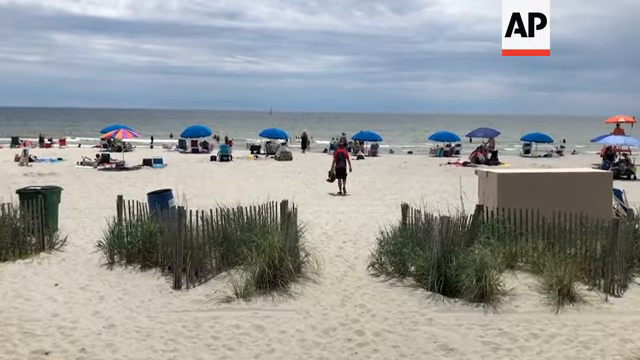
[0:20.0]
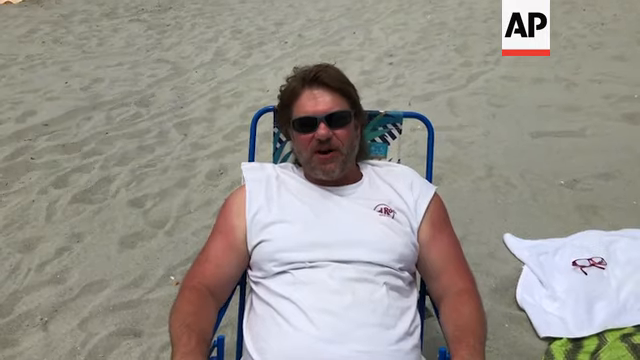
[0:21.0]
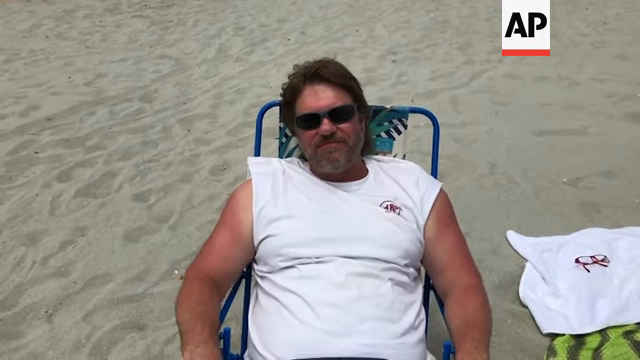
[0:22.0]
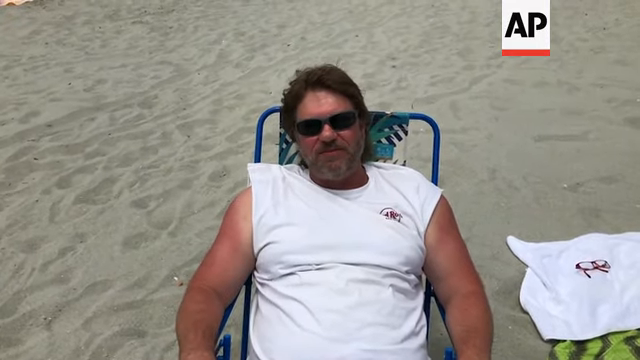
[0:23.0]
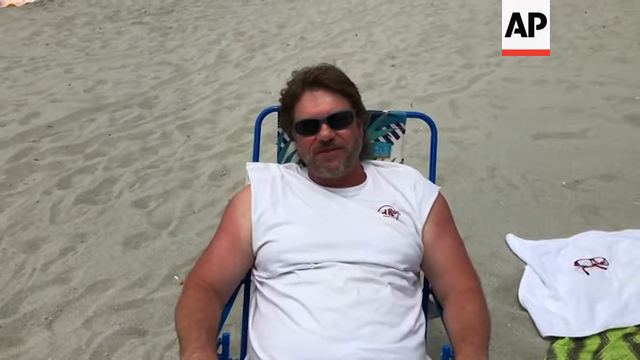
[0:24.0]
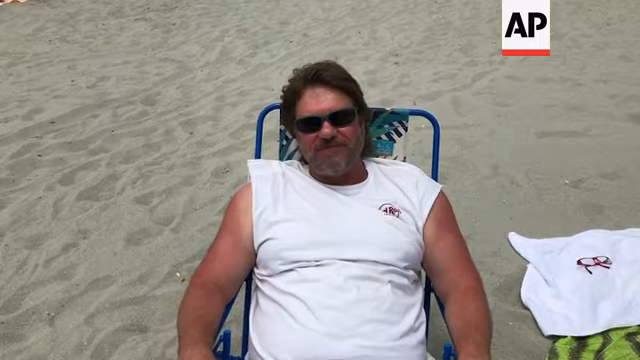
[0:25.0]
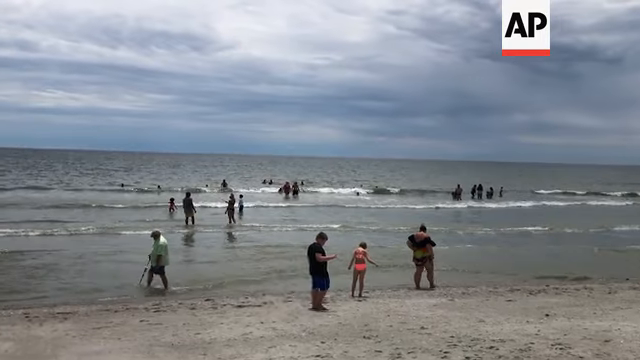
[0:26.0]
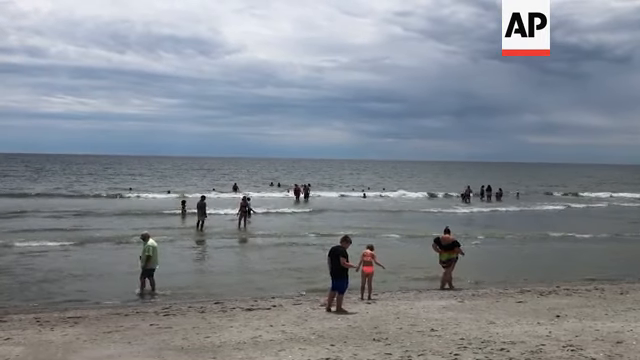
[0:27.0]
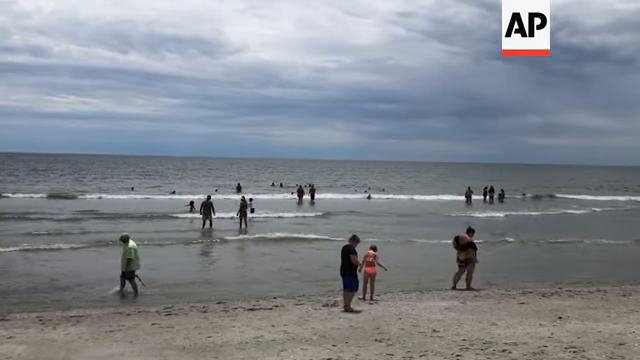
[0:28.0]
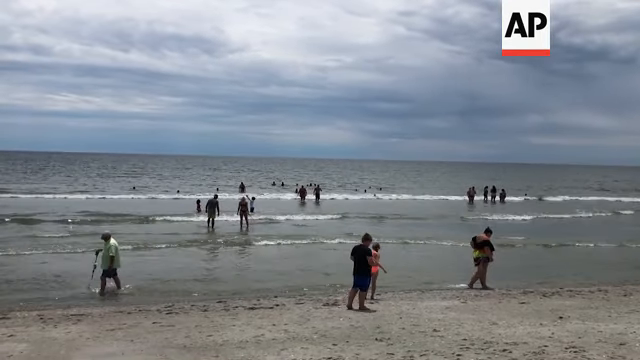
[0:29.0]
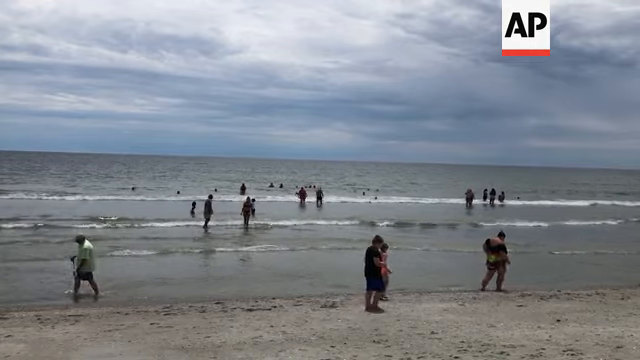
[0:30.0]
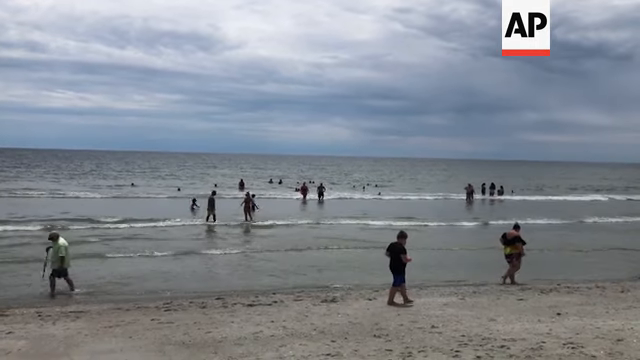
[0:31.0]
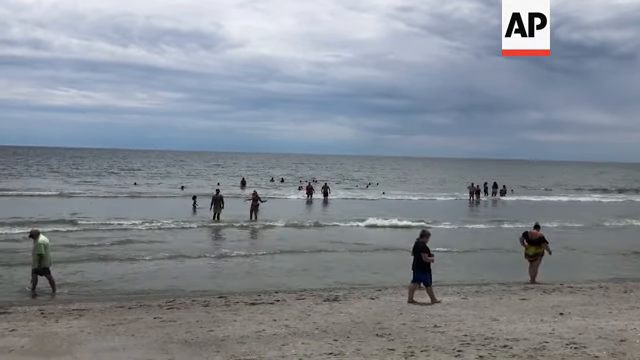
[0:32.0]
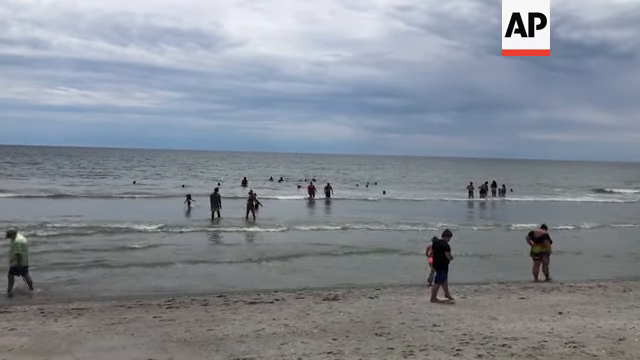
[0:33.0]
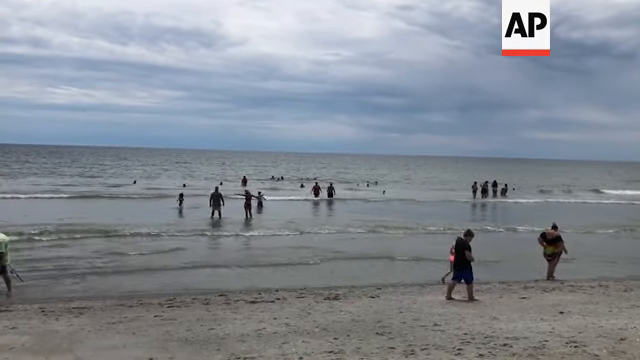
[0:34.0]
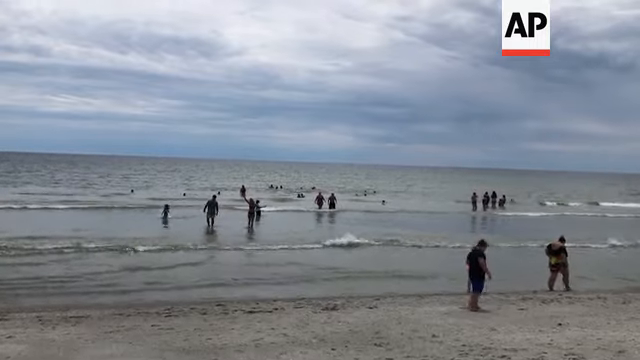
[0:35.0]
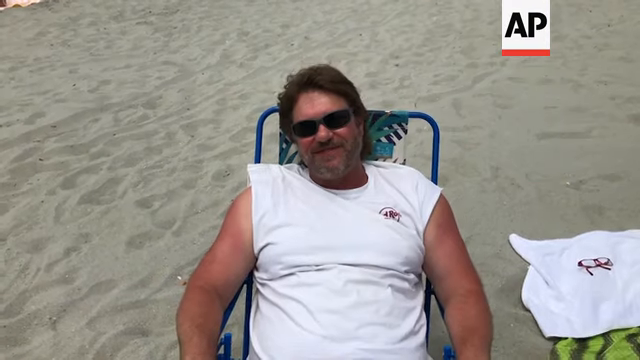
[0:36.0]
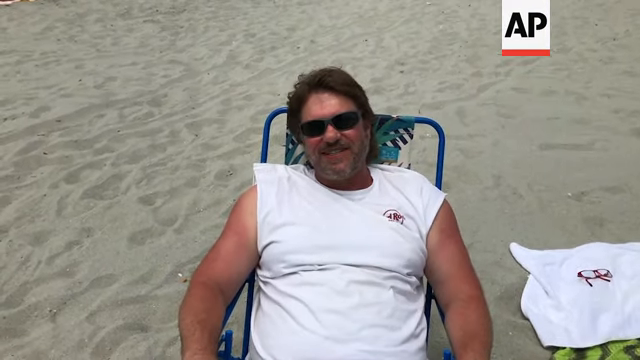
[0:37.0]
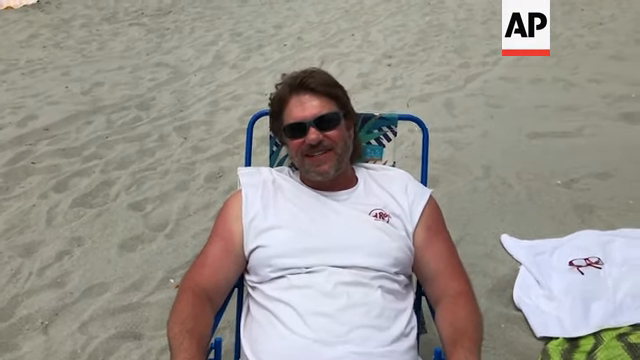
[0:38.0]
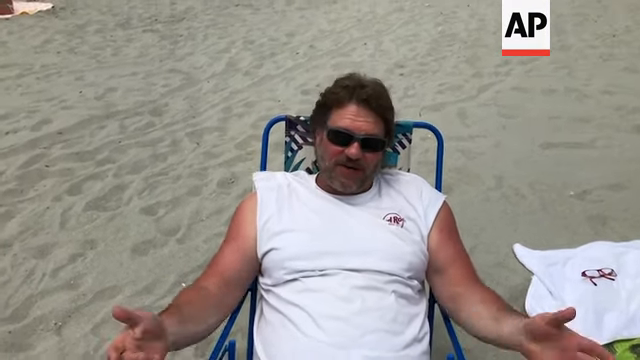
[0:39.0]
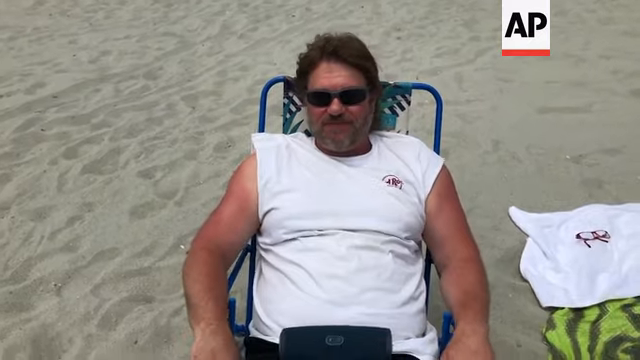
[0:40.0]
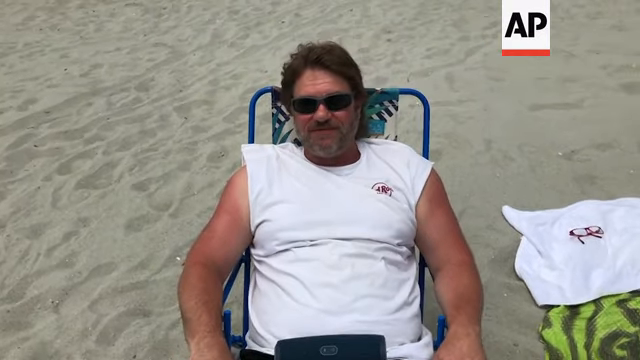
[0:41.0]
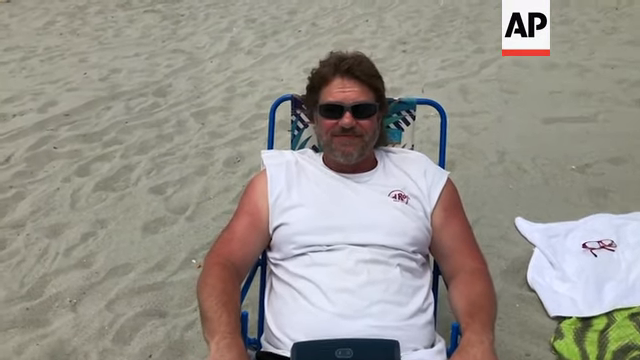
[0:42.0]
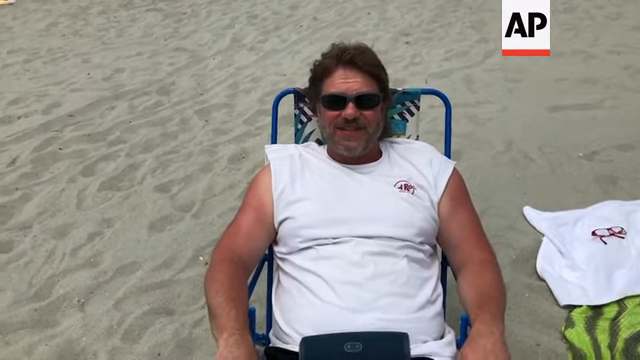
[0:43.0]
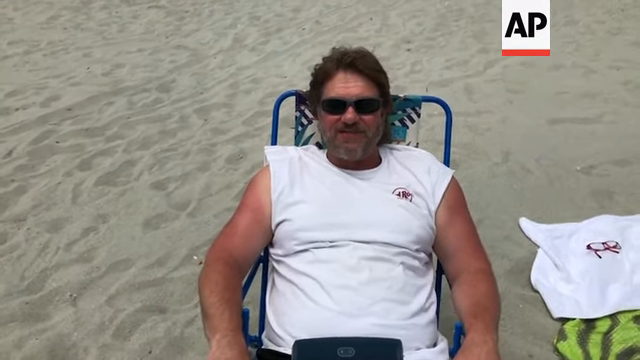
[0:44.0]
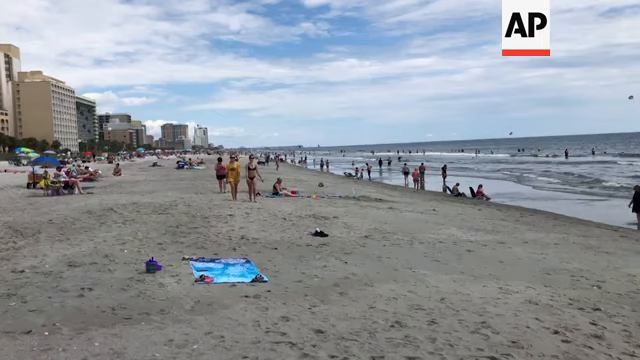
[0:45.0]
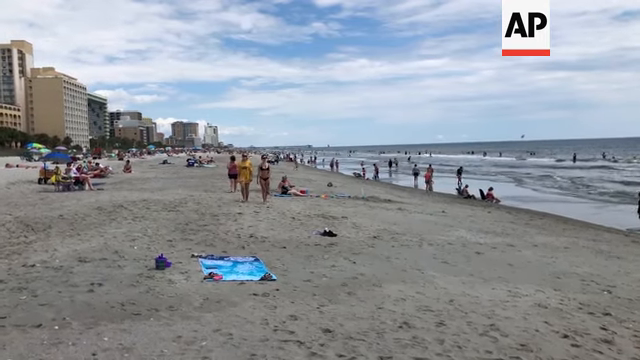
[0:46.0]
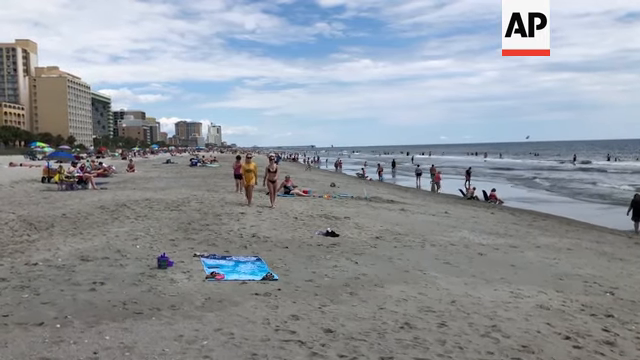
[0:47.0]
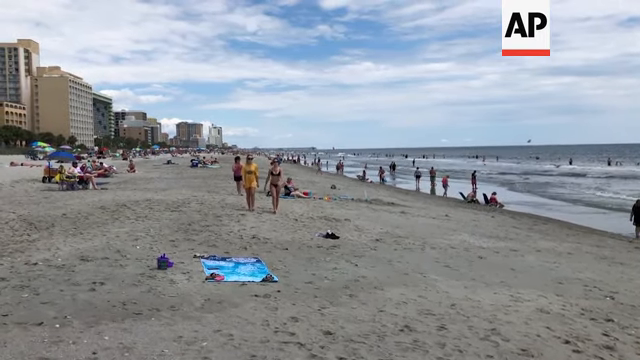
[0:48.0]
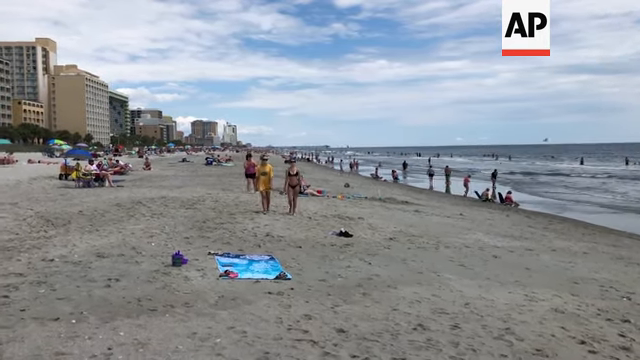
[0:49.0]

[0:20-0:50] An individual in a red shirt walks out onto the beach, on the sand, with the ocean in the background, carrying an object in his left hand. Next, a man sits on a chair on the beach, talking; he wears a cut-off-sleeve shirt and sunglasses and has a light beard. Then waves come in under a cloudy sky, with the ocean sending them onto the beach. Individuals walk out from the sand toward the water. It is low tide, as the waves are not crashing in very hard. An individual walks from right to left using some type of assistance that looks like an umbrella. The video then switches back to the same man in the sleeveless shirt and sunglasses, talking again.